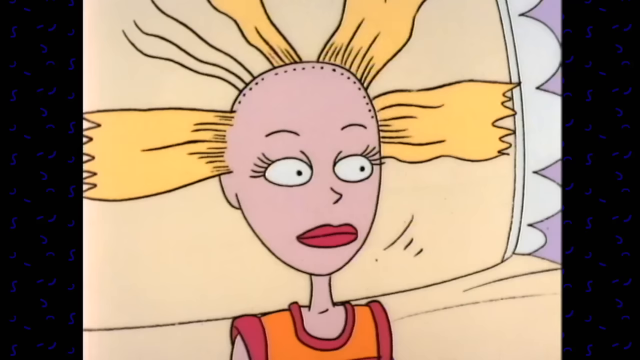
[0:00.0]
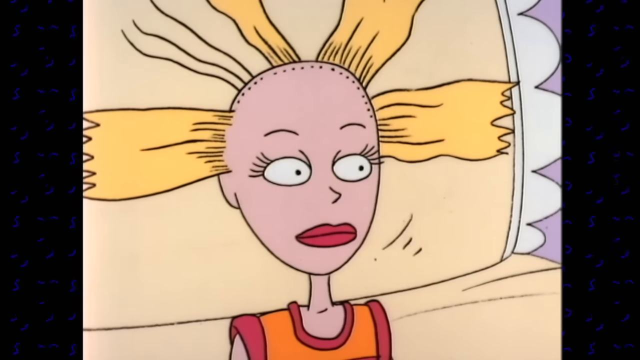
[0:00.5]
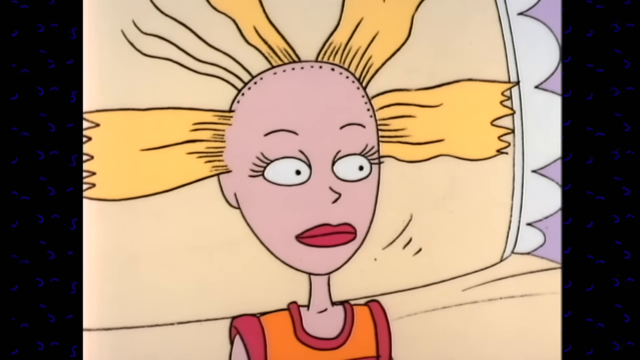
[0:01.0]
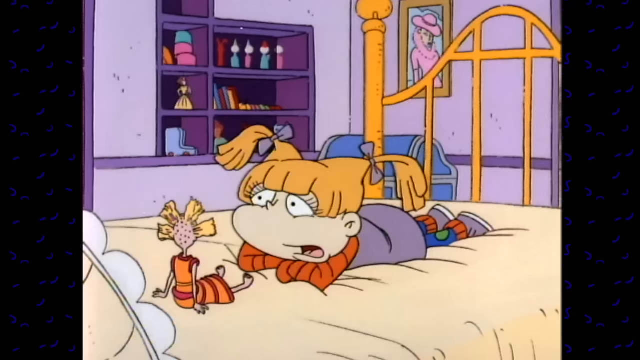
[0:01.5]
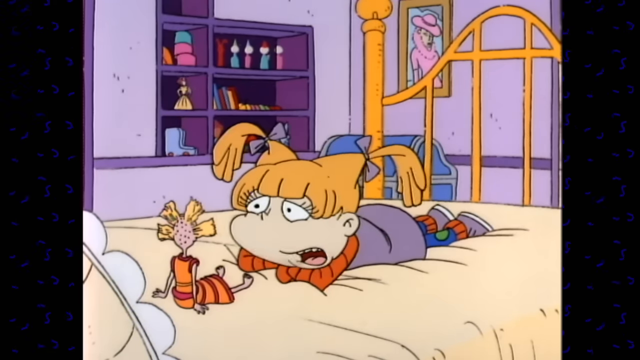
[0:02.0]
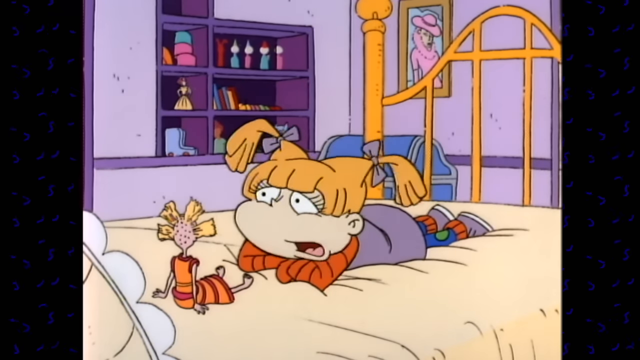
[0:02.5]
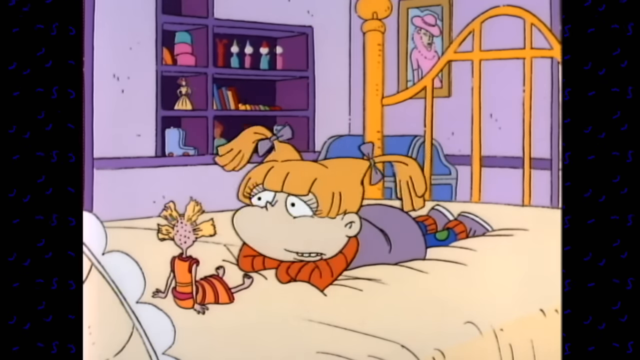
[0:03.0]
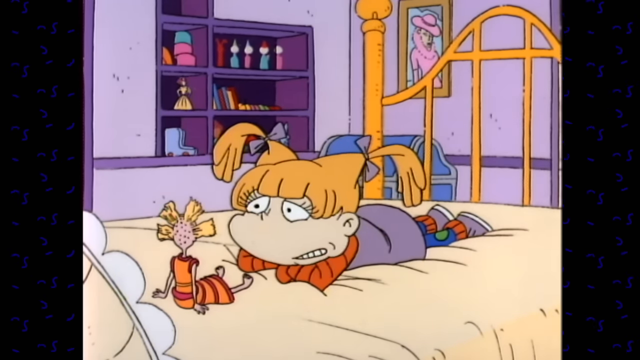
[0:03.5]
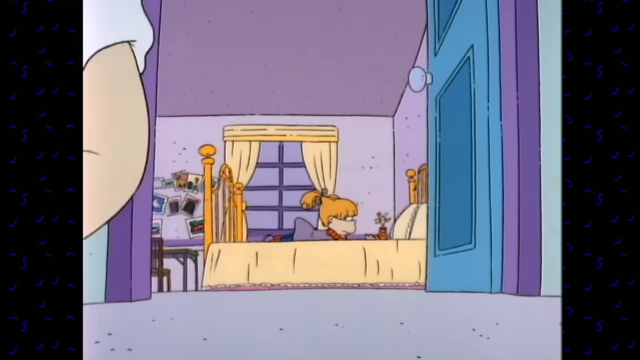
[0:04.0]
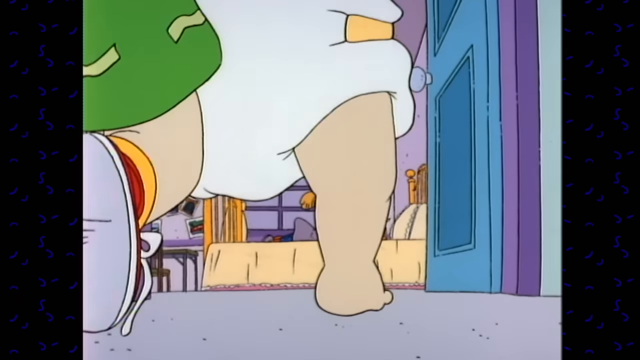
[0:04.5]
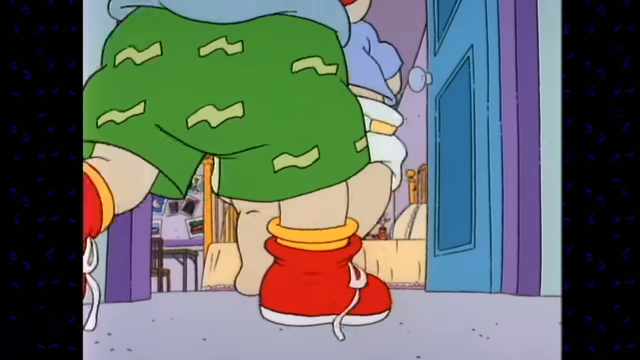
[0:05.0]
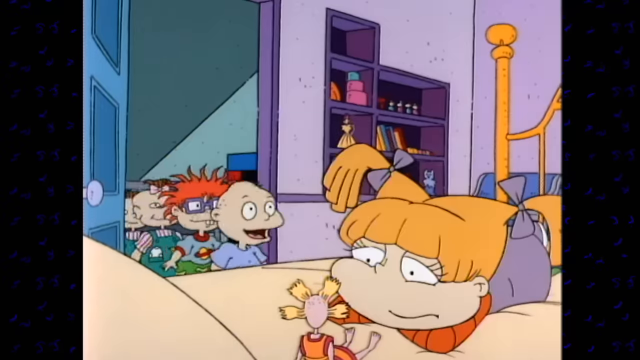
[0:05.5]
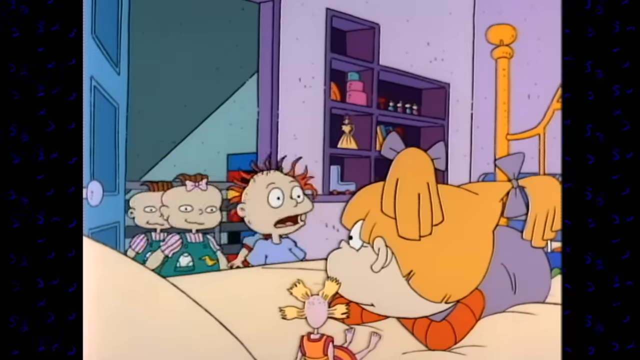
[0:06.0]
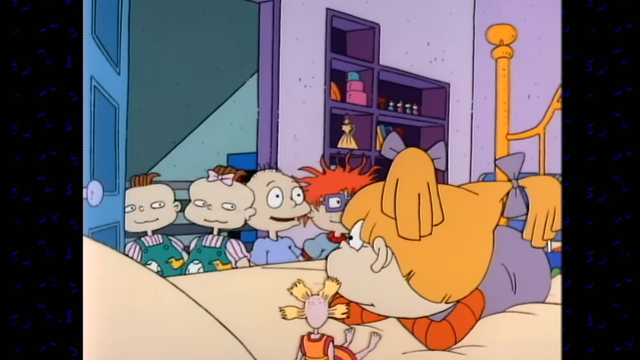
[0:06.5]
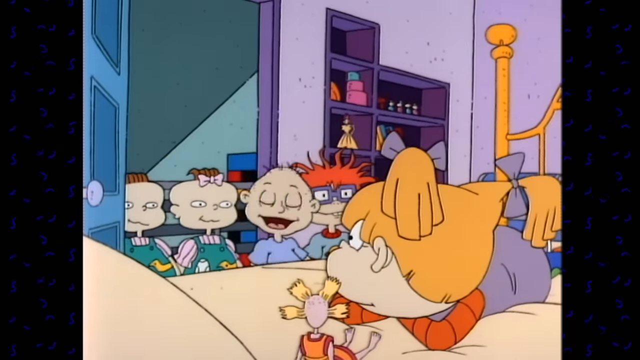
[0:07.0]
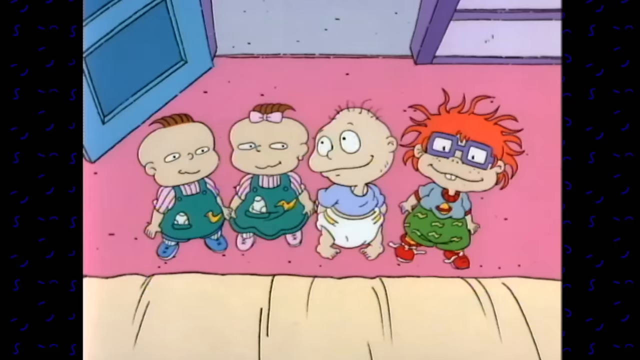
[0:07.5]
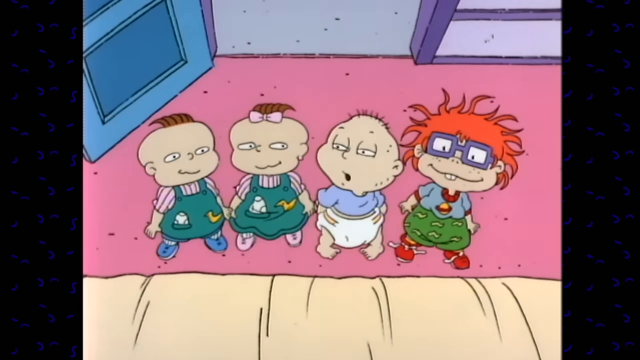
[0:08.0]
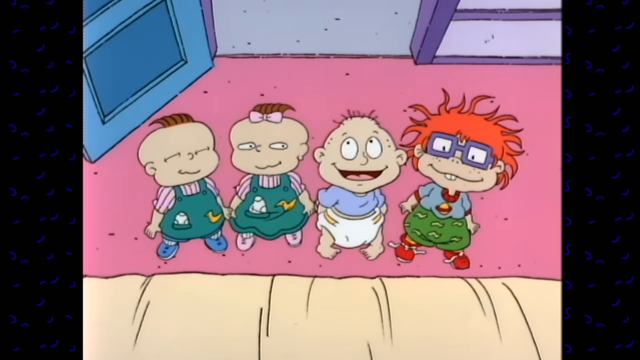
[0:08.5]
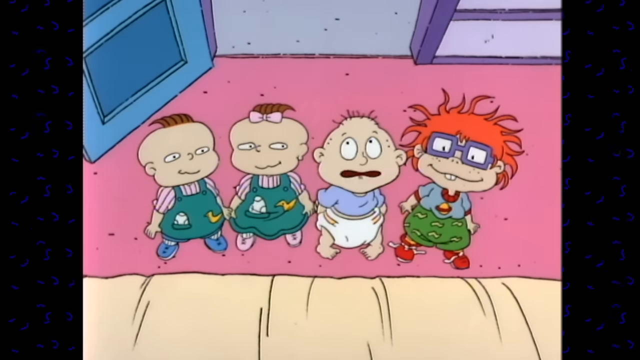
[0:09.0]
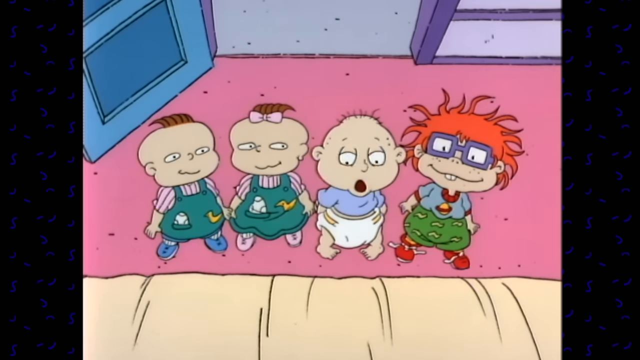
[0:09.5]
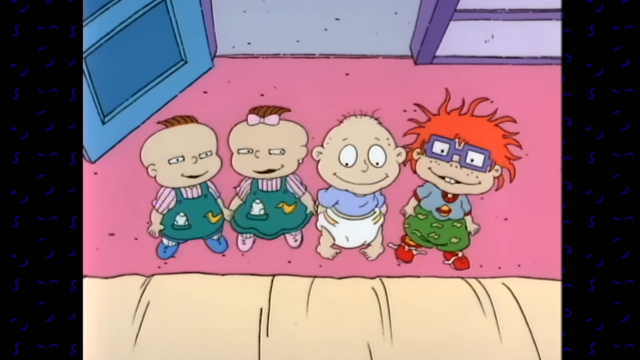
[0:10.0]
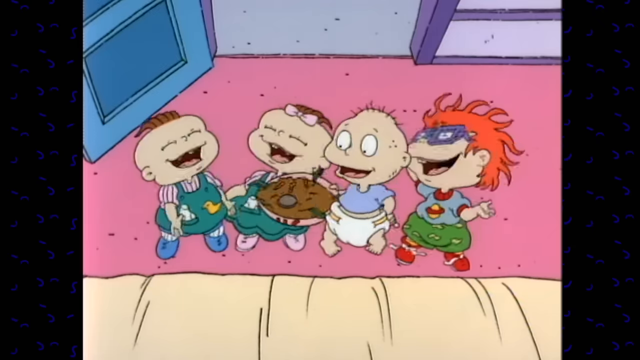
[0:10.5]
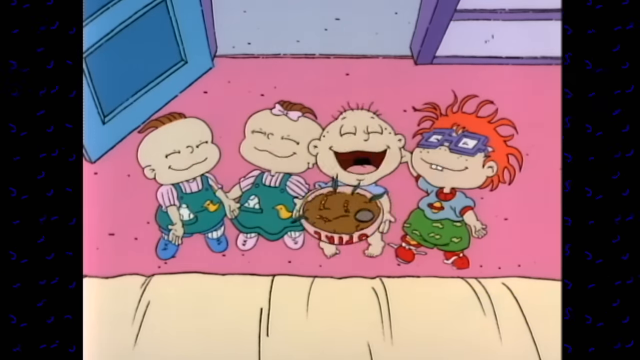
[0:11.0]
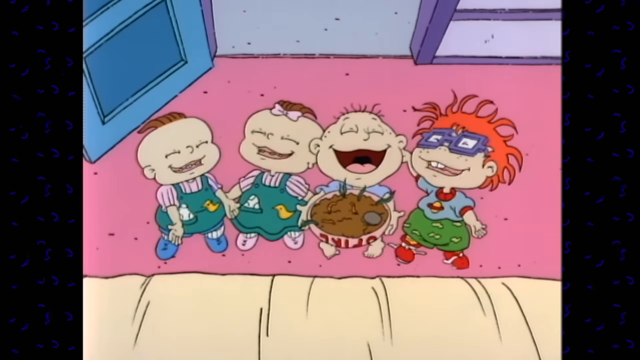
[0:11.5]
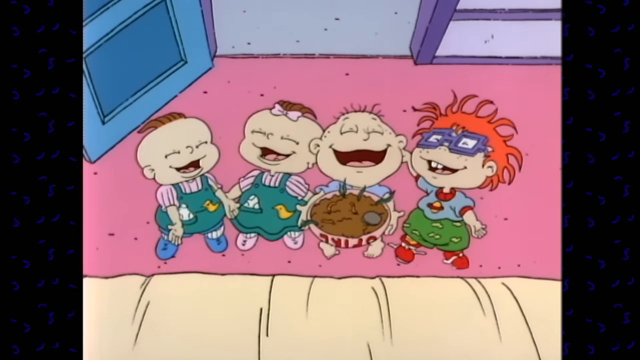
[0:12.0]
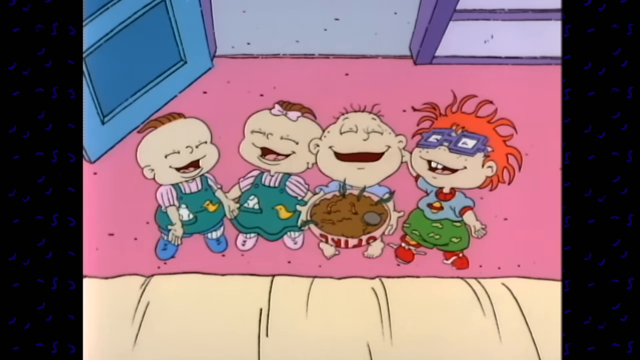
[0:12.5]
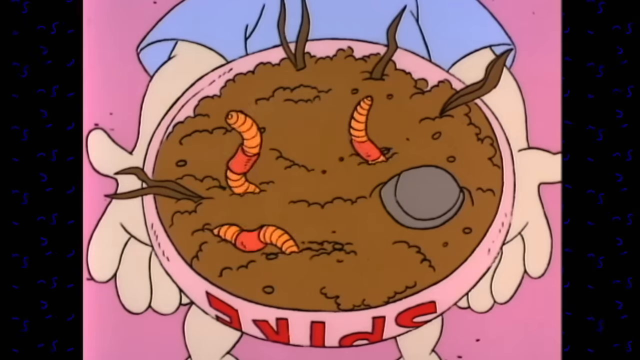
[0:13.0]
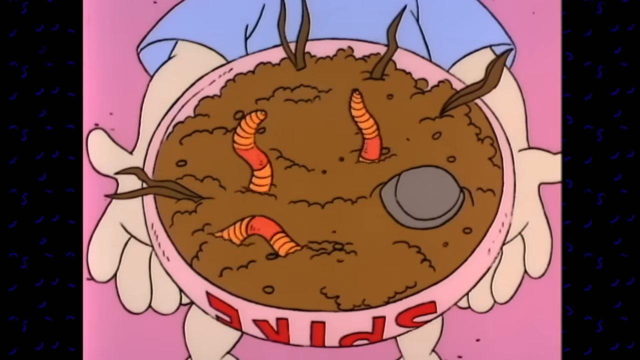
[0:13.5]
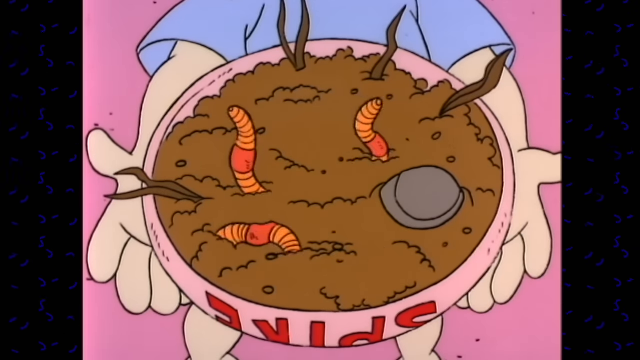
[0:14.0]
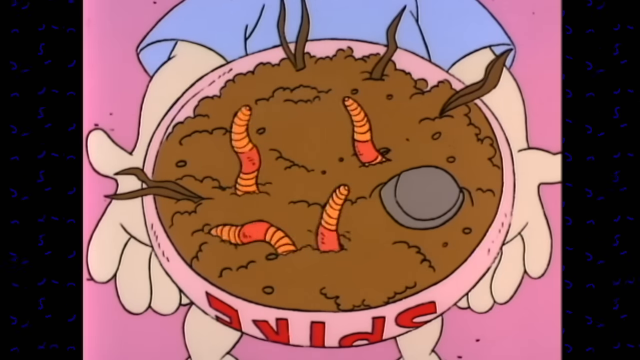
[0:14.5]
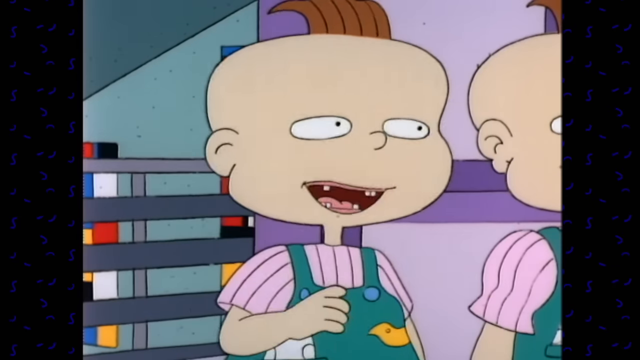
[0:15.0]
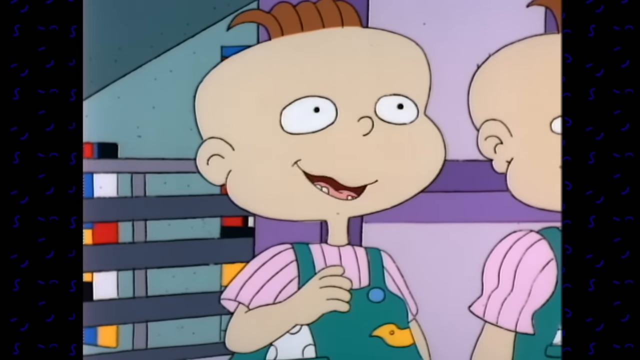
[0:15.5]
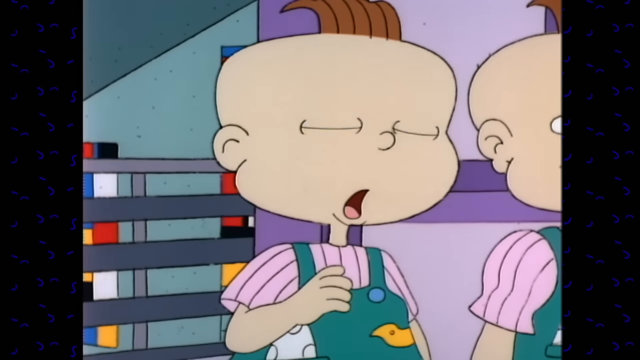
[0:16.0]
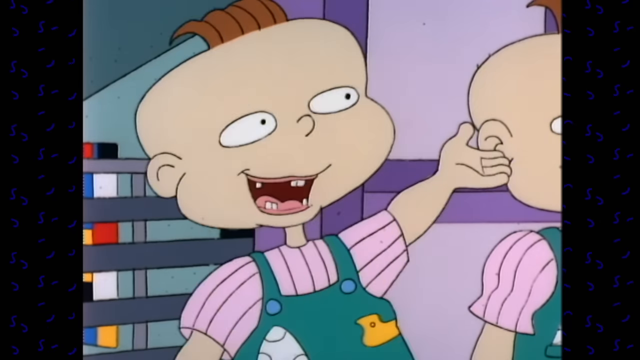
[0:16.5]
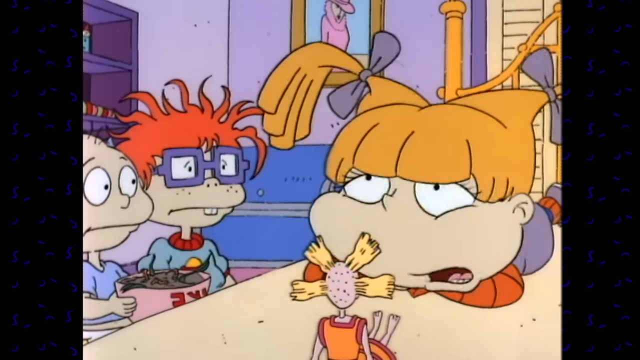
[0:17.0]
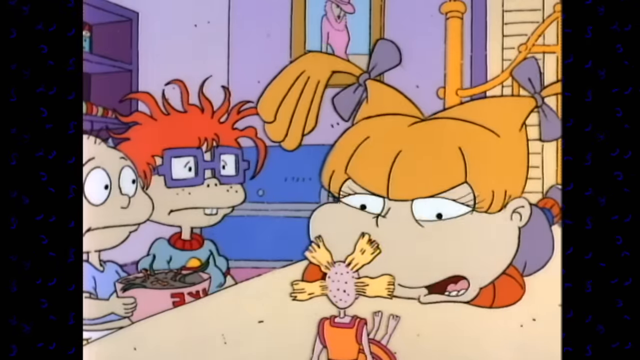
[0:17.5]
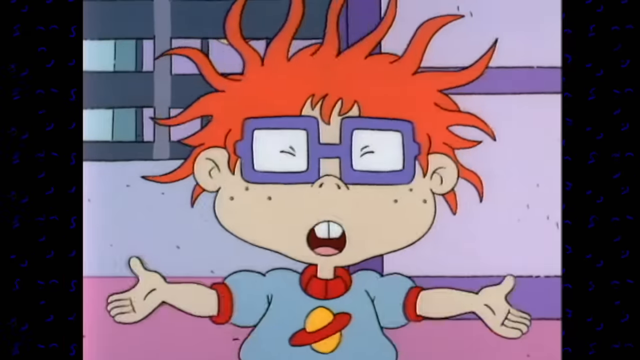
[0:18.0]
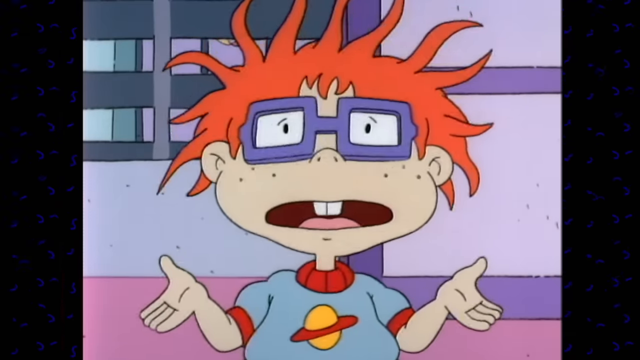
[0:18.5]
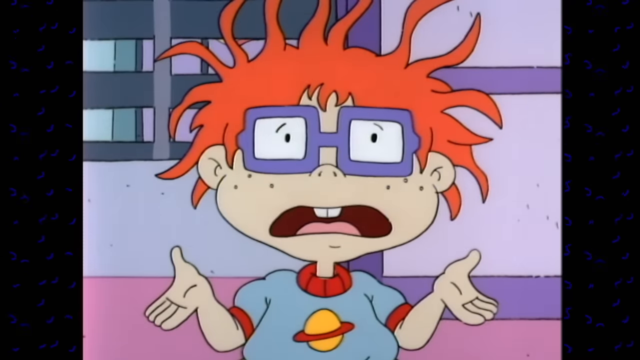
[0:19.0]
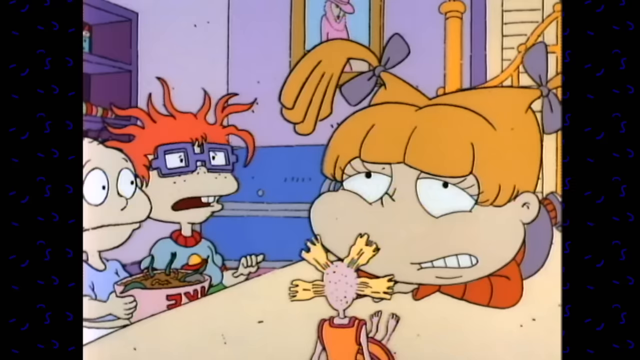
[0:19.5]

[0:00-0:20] This clip is from Rugrats on Nickelodeon and shows a girl lying on her stomach on her bed, facing her pillow, with a little doll sitting up against the pillow. Four babies are on the ground, and they come in carrying a bowl of dirt with worms squirming out of it to show her. She doesn't seem impressed at all; when they come in wanting to talk to her and show her what they have, she seems more interested in the doll she is staring at. Her room has pink carpet and a blue door. The babies look like they are very proud of the bowl of dirt and worms they brought for her.